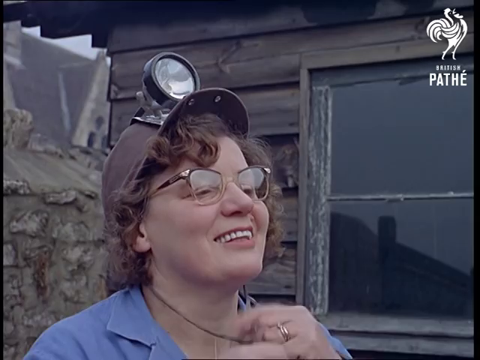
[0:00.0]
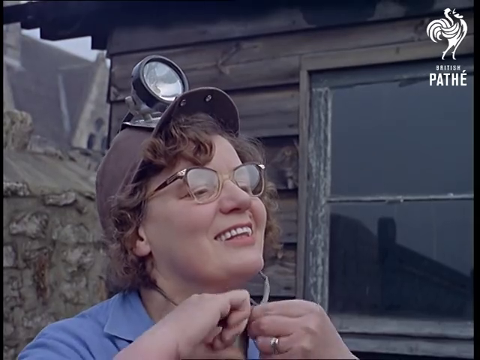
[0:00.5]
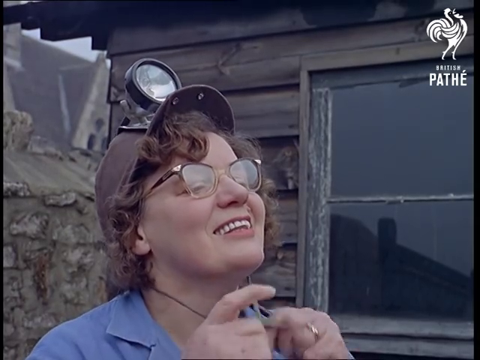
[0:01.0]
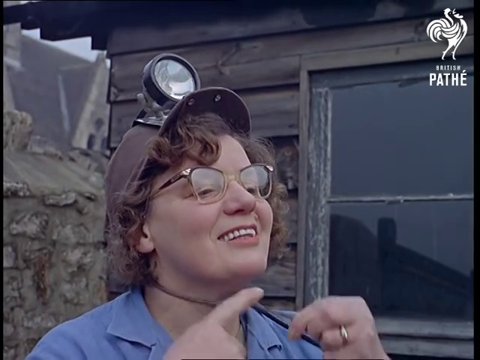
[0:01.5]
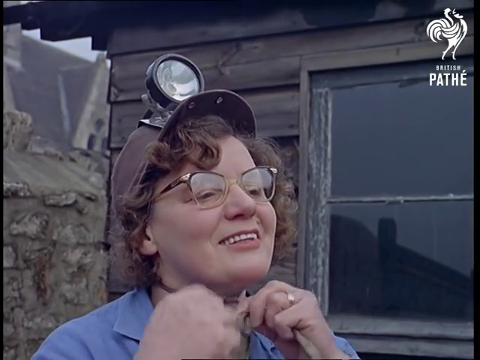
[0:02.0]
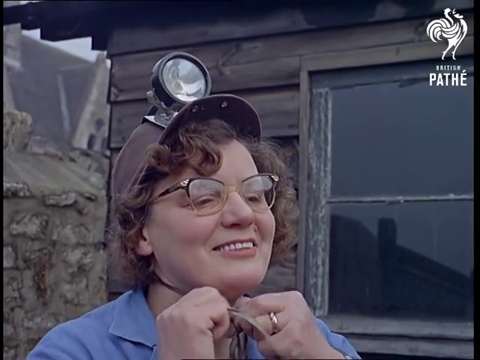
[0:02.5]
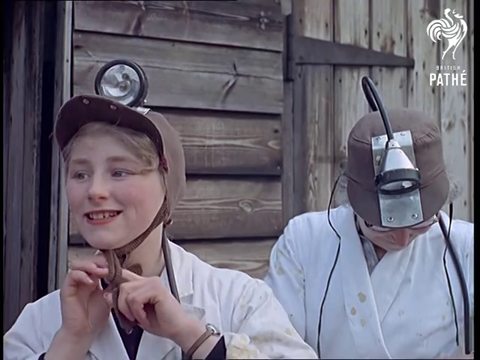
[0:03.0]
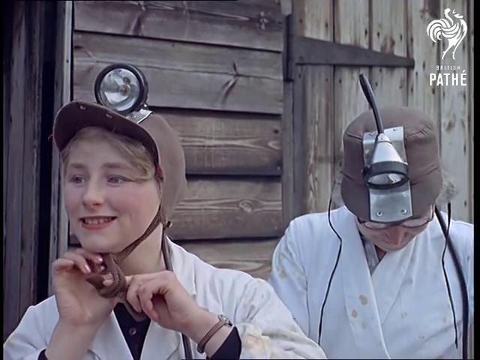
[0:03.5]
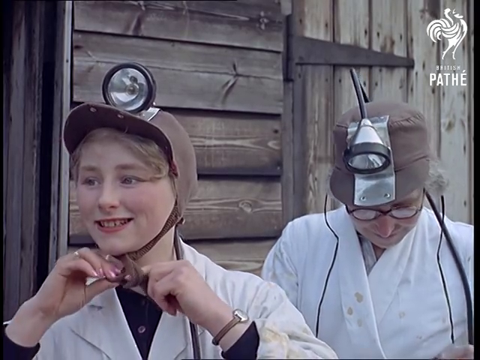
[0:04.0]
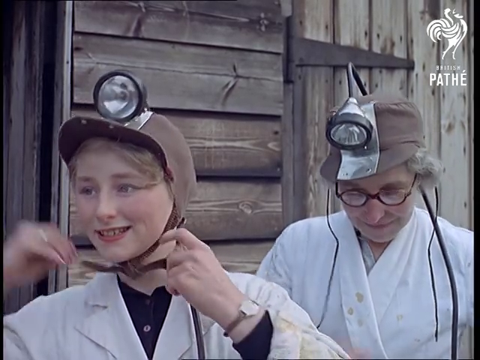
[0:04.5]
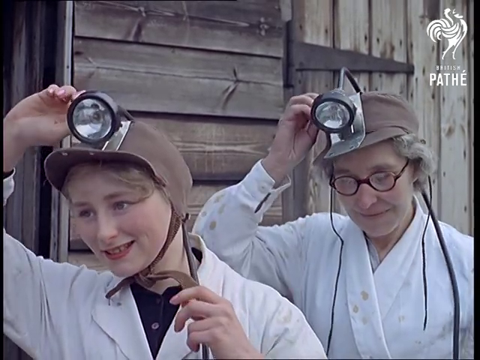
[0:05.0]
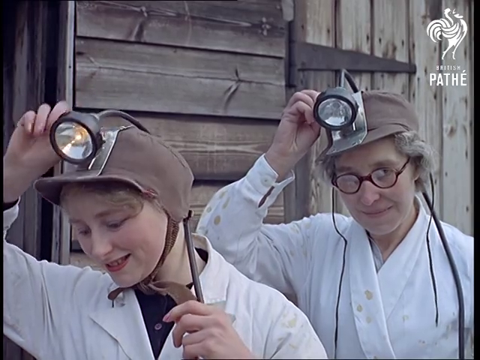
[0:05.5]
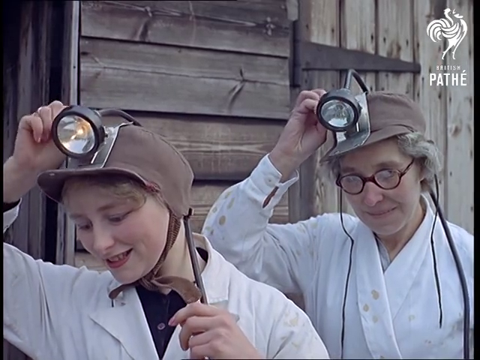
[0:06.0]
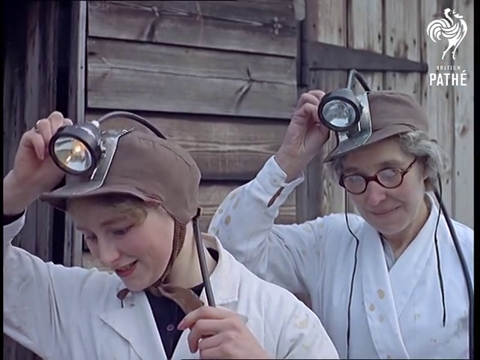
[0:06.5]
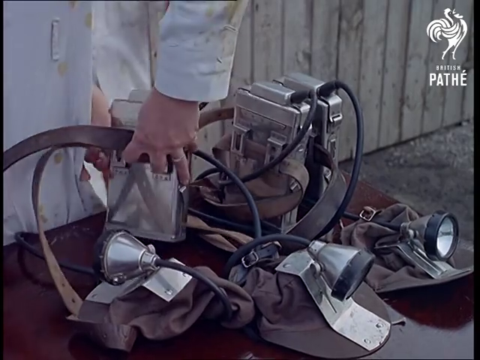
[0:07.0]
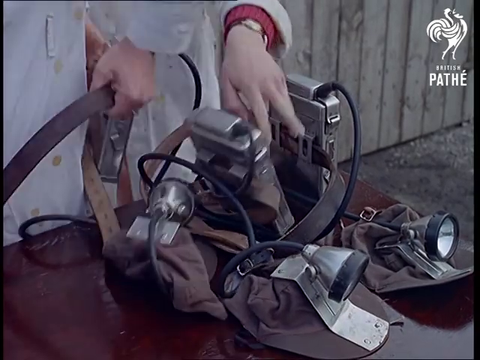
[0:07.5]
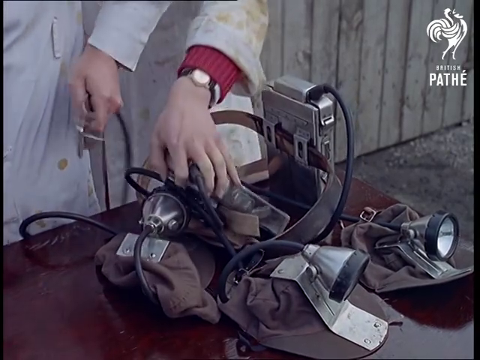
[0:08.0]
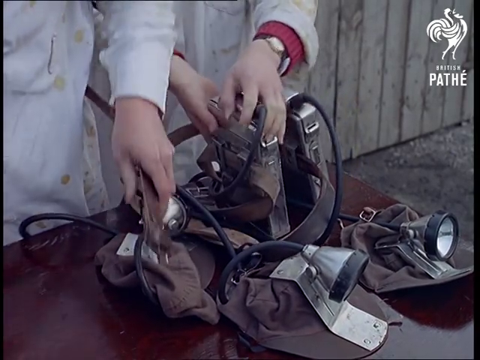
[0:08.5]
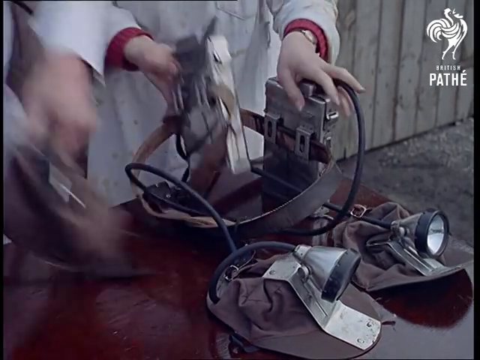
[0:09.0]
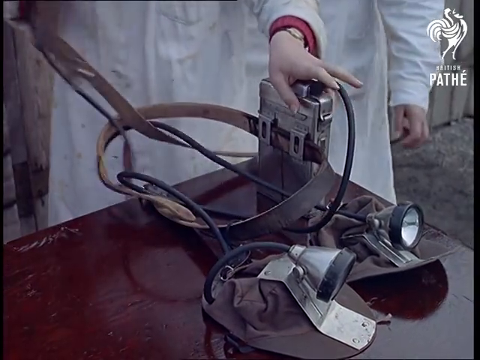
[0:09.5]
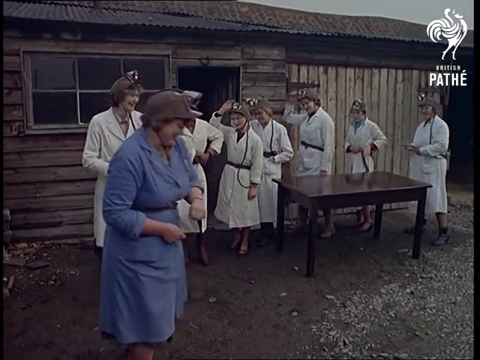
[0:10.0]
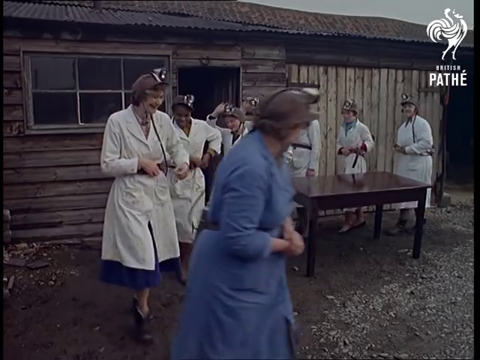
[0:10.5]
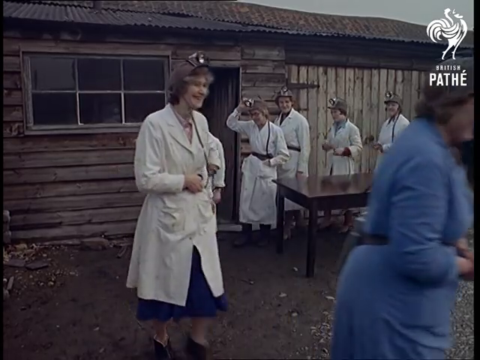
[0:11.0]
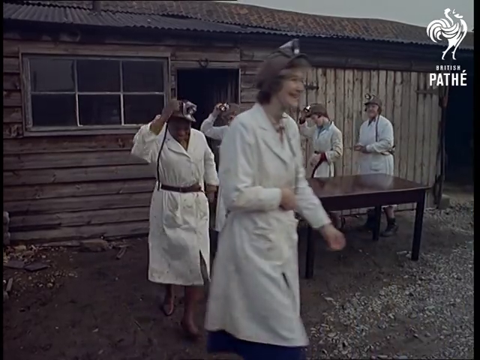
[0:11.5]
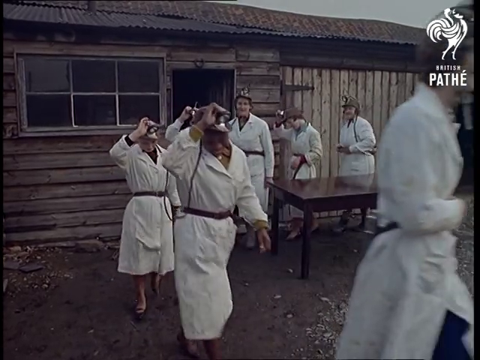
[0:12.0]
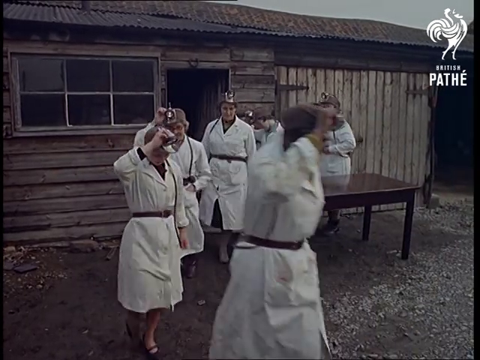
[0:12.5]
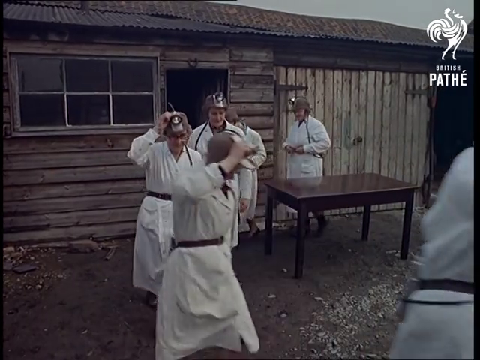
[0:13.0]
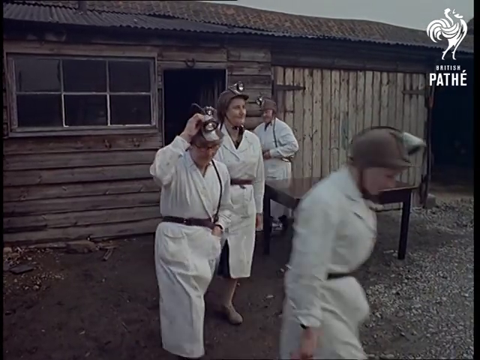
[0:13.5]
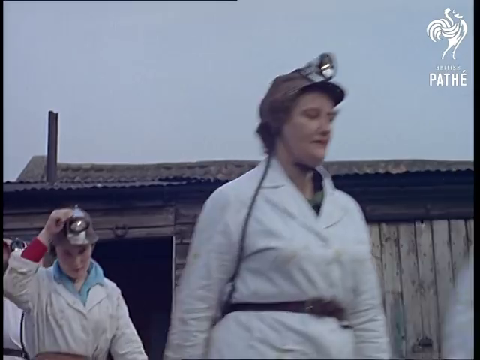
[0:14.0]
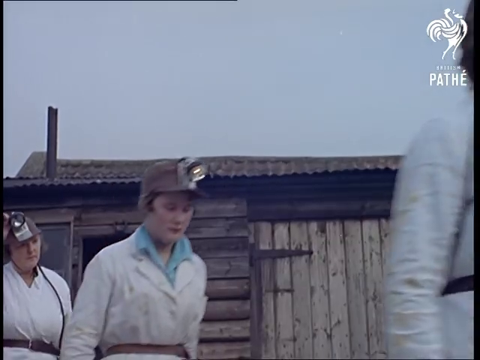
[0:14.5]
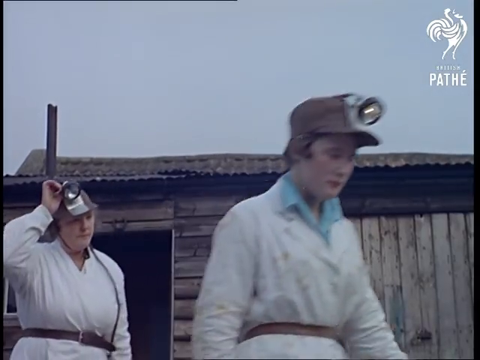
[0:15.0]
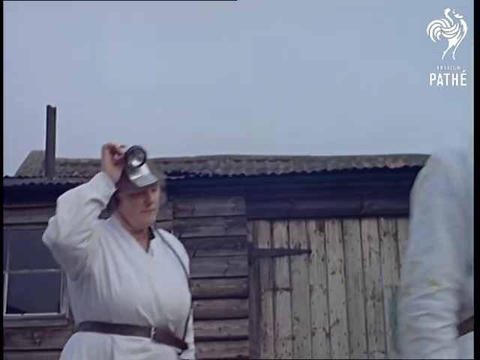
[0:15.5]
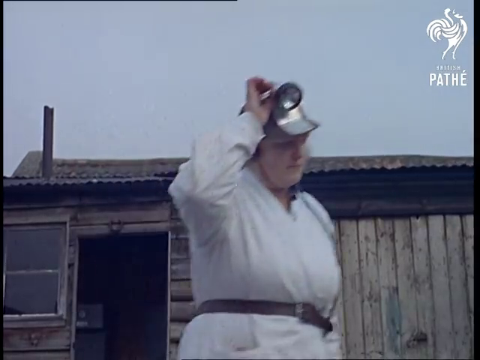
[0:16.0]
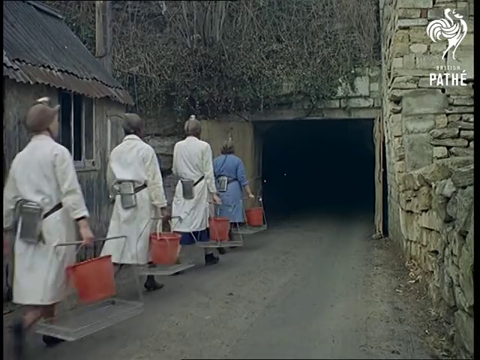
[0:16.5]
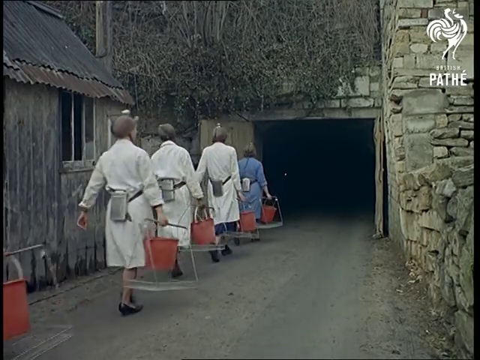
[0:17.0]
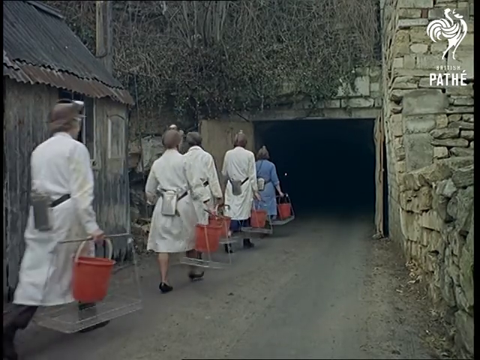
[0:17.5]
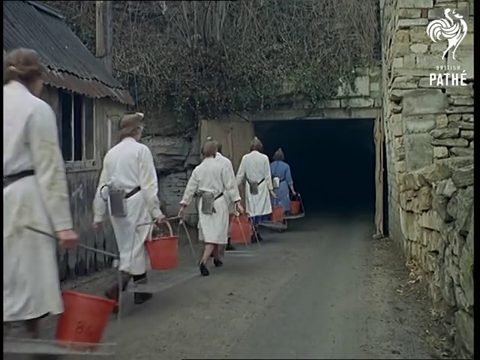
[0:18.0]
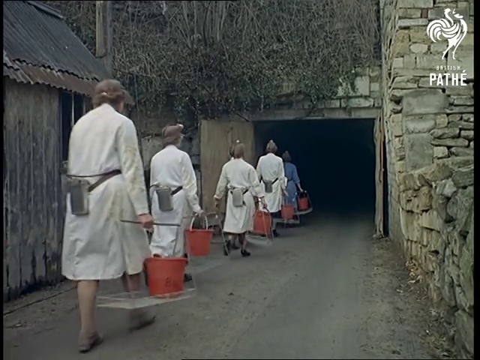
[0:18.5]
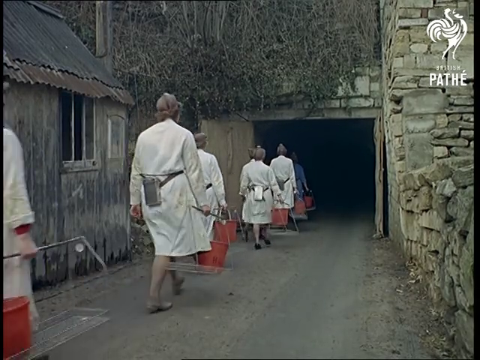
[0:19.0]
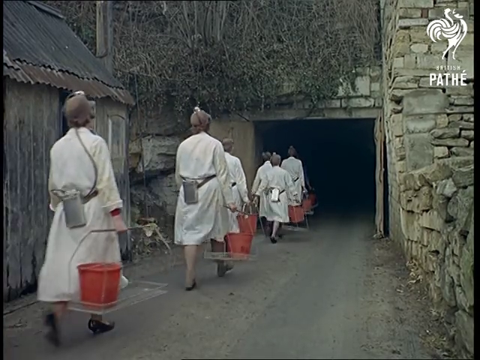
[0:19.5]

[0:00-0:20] A leader and a group of eight women tie ribbons under their necks to fasten headlamps onto their heads. The women wear white dresses, and the leader, in a blue dress, shows them how to tie the lamp onto their heads. Carrying buckets and nets, they walk in a line behind the woman in the blue dress into a tunnel. They do not look distressed; they look eager and happy to be there. They have to twist the lights on their heads a couple of times to get them to sit and balance correctly, and some of them look concerned about it as they walk. They also have something silver, of unclear type, tied around their waists.